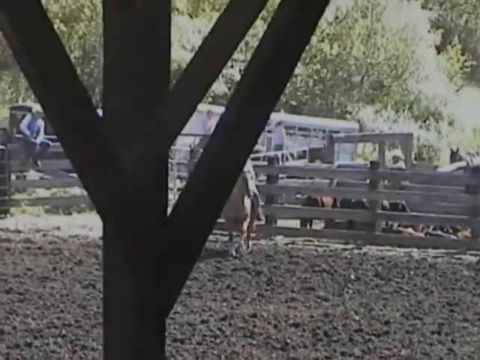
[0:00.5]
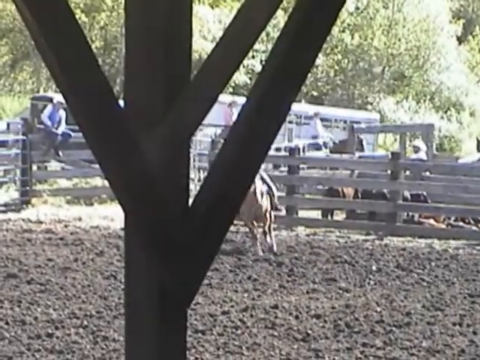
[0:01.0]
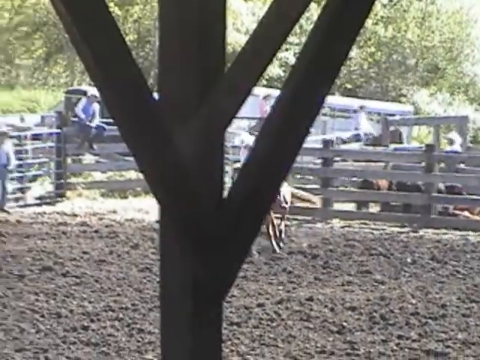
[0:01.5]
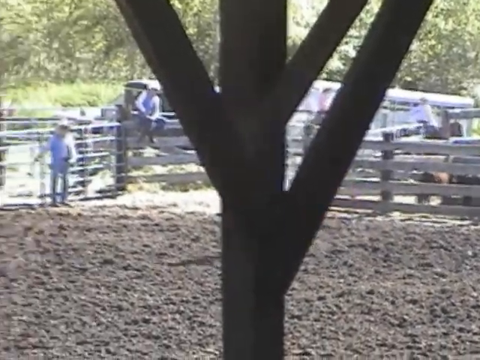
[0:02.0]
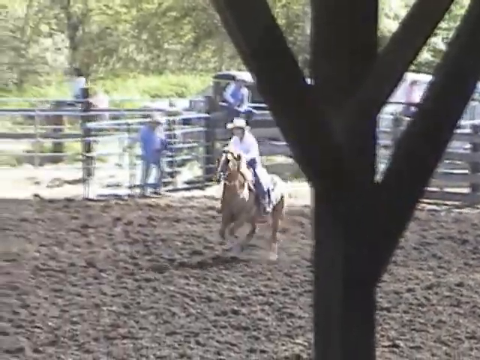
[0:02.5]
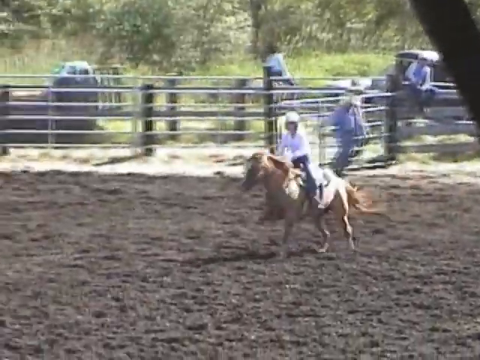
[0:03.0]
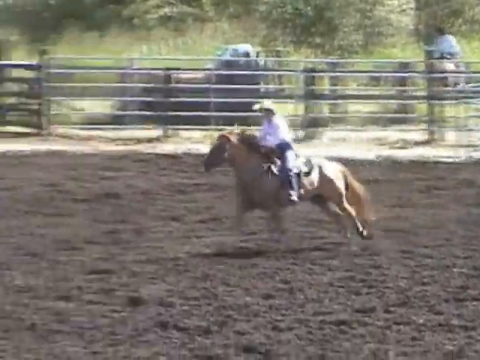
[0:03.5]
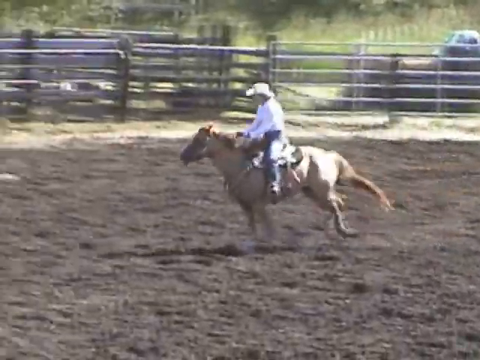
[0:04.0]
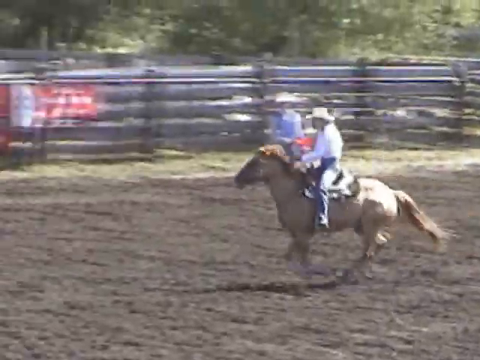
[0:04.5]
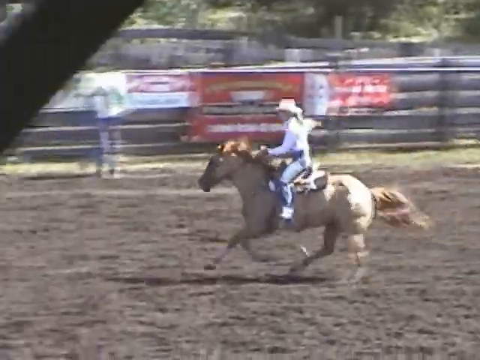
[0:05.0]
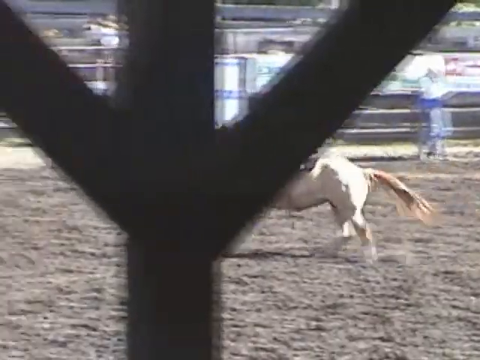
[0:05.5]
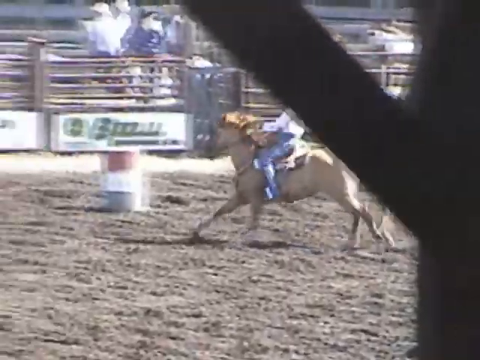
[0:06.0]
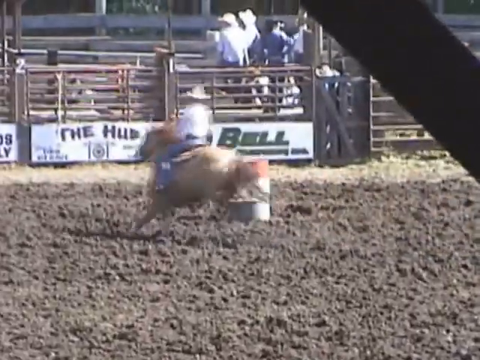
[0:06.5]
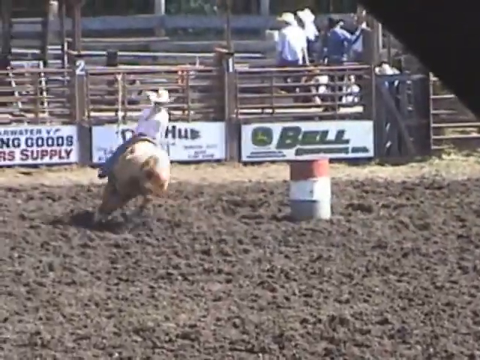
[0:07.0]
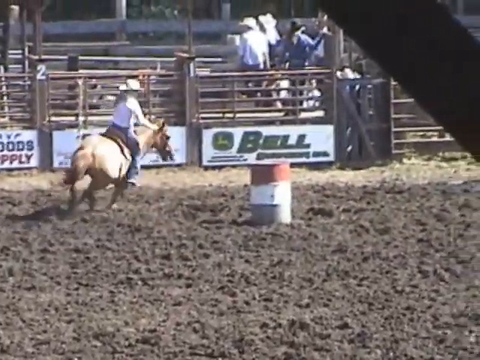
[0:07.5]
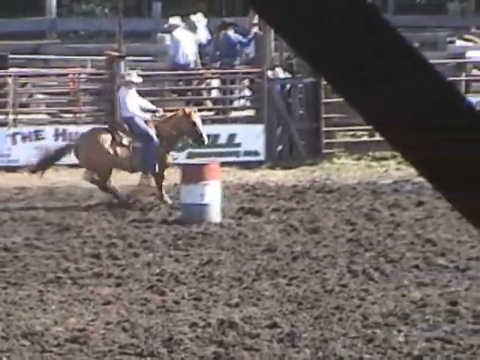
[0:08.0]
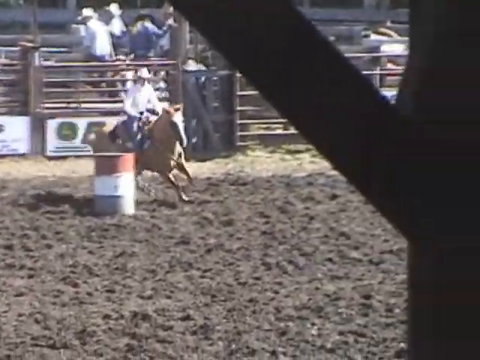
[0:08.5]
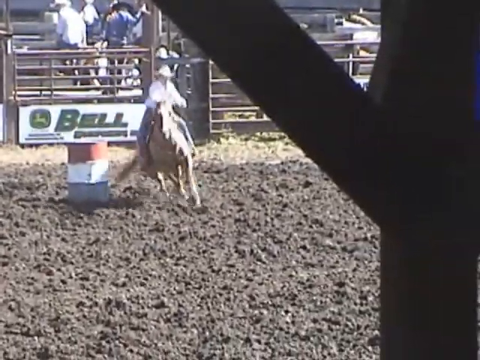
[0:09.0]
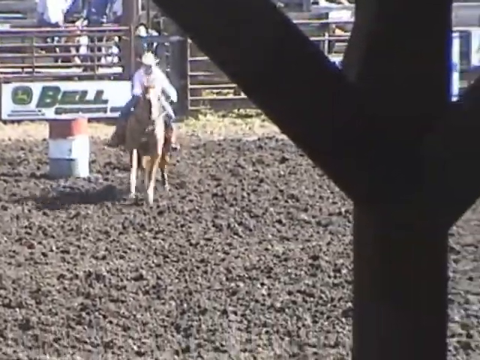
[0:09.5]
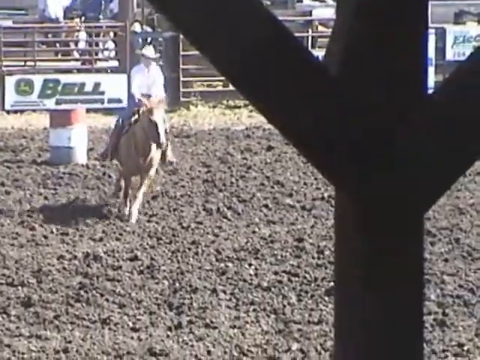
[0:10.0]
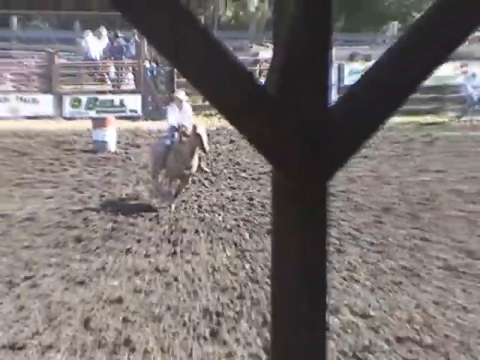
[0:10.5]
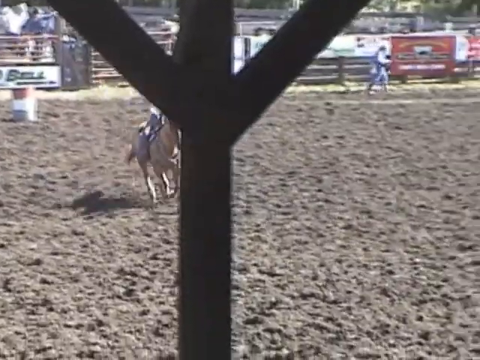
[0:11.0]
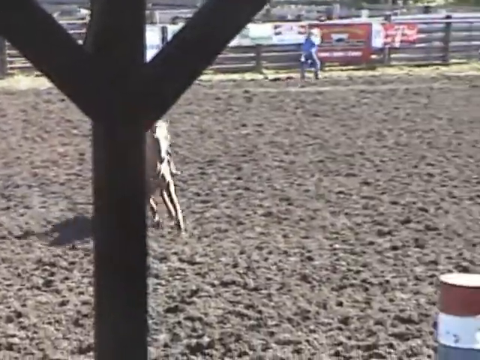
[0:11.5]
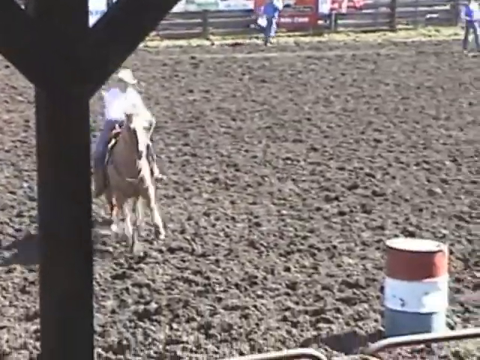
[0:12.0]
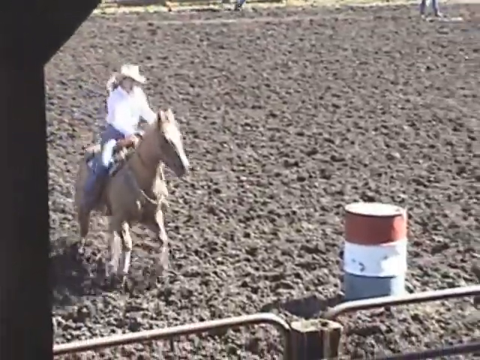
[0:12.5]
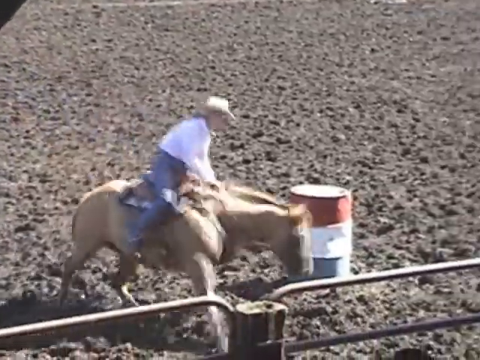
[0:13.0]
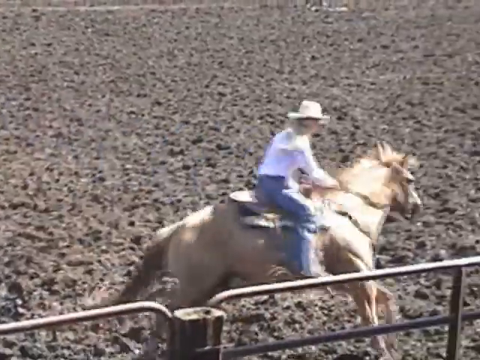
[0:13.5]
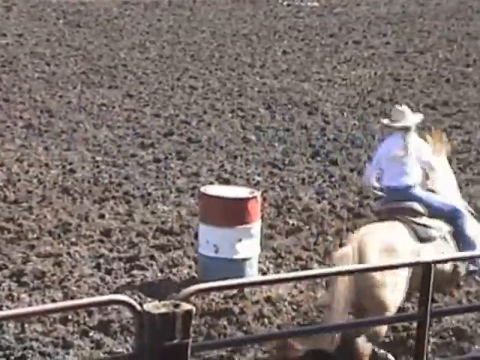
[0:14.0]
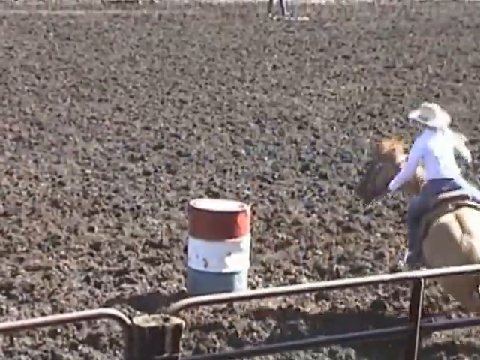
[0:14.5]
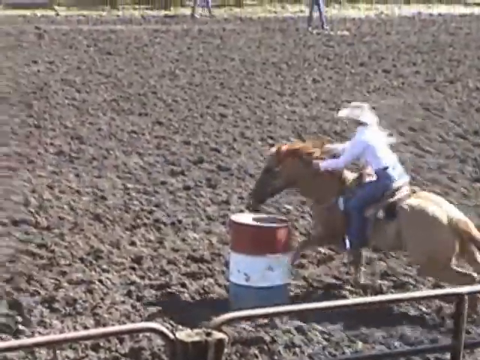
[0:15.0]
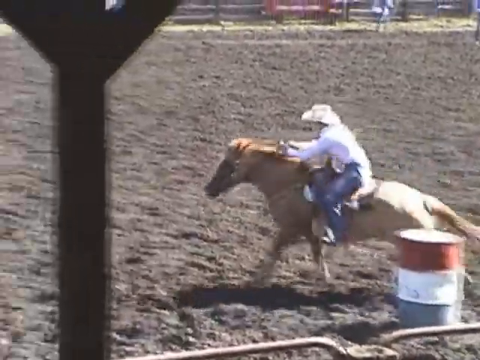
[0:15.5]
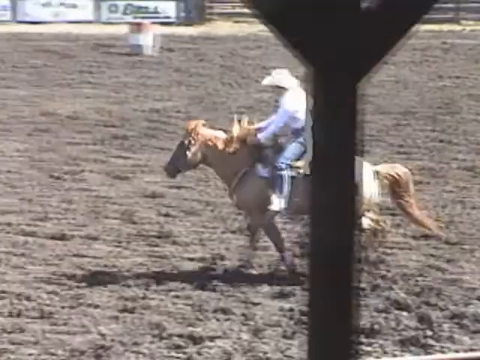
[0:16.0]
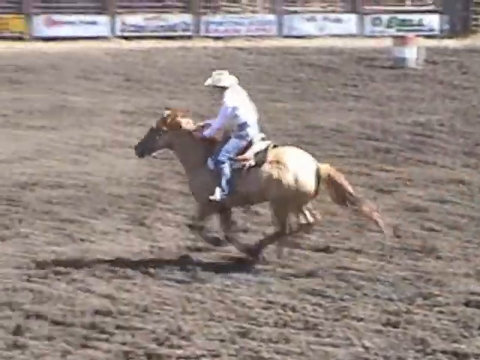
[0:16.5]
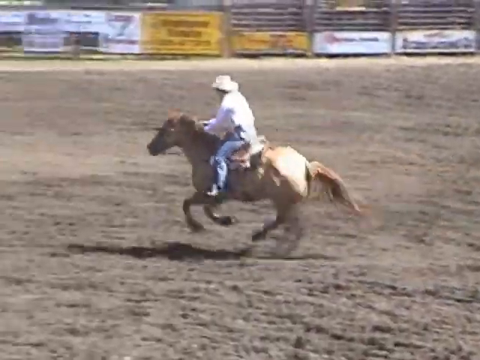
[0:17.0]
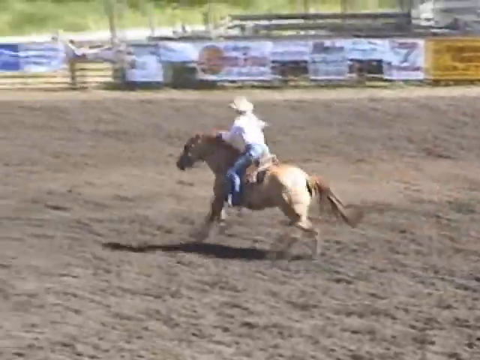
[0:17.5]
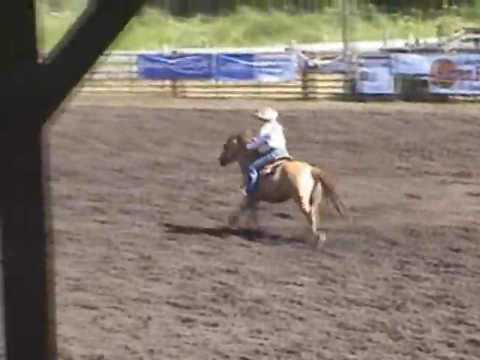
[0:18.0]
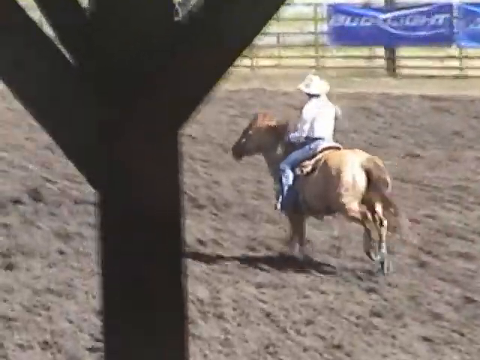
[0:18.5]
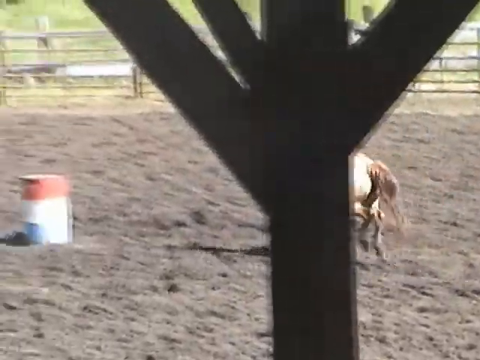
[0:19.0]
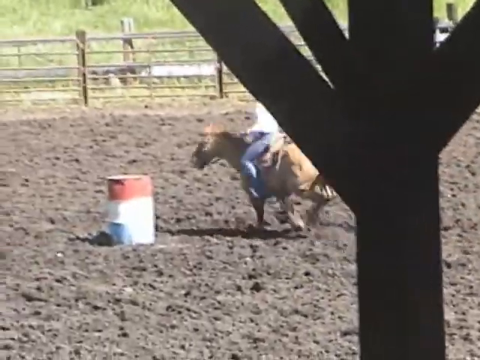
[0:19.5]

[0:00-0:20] The video looks to be a rodeo, or training for one. A person, apparently a woman, rides a horse around a small arena with barriers all around it. She rides the horse toward red and white barrels, goes around each one and then speeds off to the next, going around at least three of them. The rider has long hair and wears a white shirt, a hat and long jeans. The horse is sort of light brown, with a mane and tail a slightly darker shade of brown. People on the sidelines look on, although some are looking the opposite direction. There is advertising around the fences, one for a place called Bell. Another barrier is momentarily in front of the camera as the rider goes around one of the barrels. The ground where they ride is almost mud; it is dirt that has been ridden on a lot and seems very soft. The rider is very capable and skilled. Other people stand inside the arena watching, not behind the fence but inside the enclosure itself.